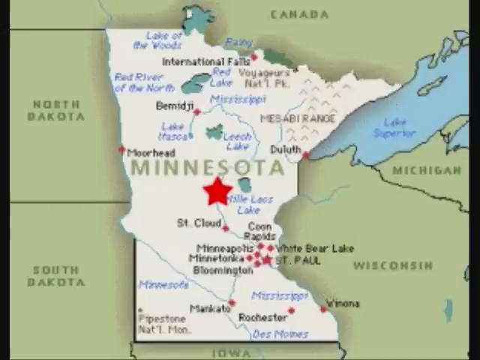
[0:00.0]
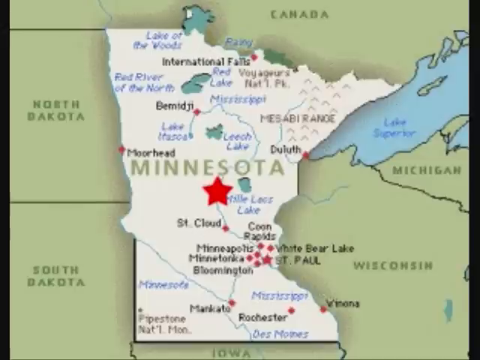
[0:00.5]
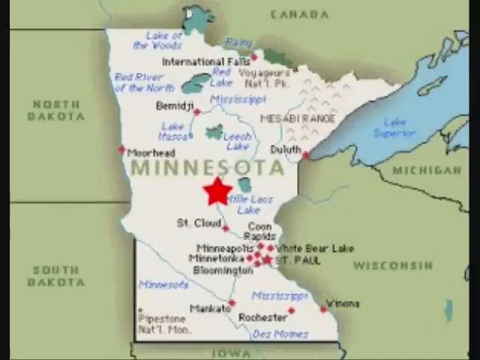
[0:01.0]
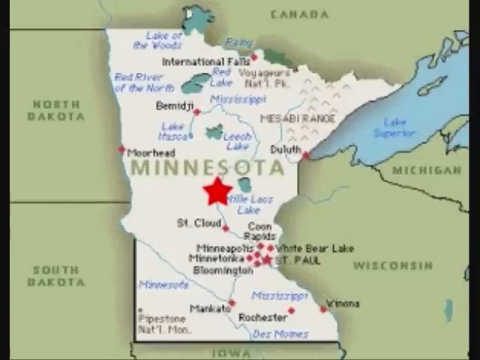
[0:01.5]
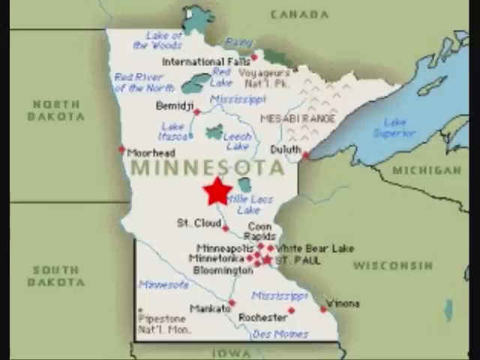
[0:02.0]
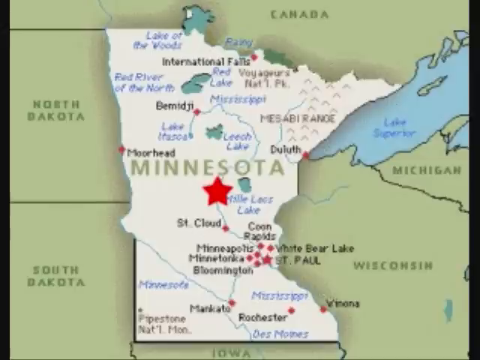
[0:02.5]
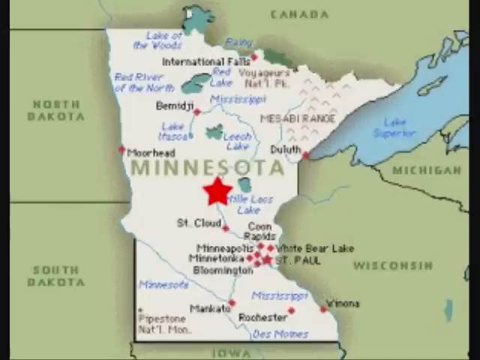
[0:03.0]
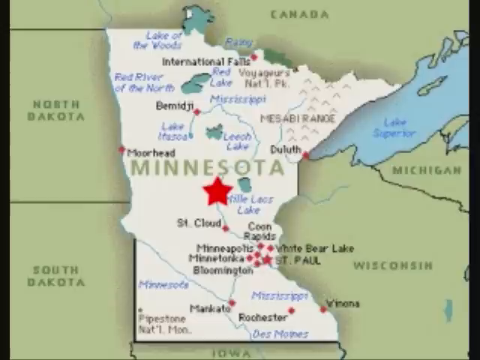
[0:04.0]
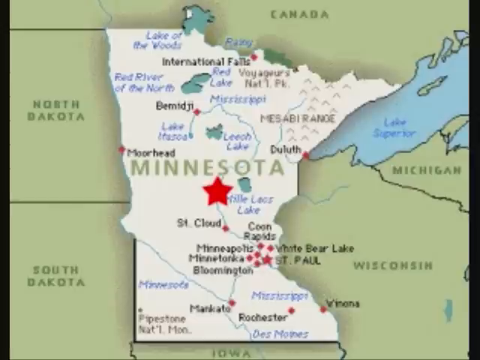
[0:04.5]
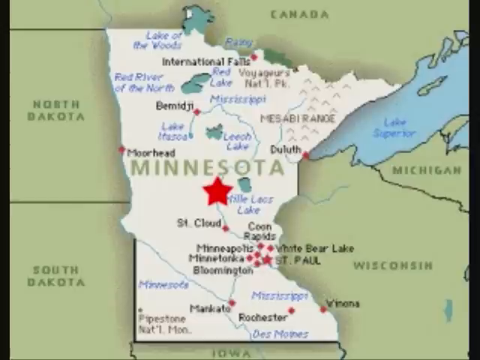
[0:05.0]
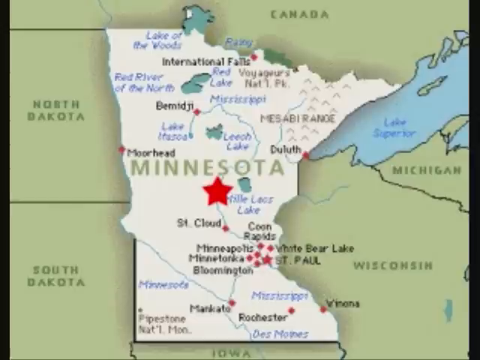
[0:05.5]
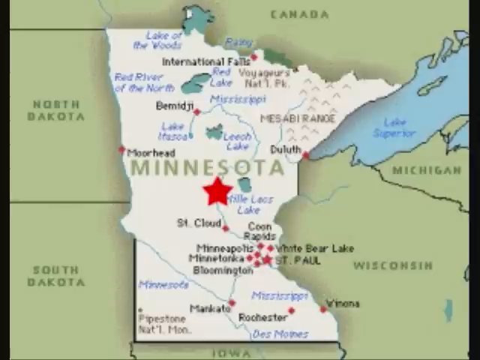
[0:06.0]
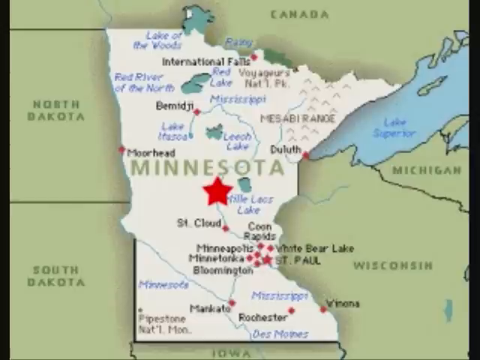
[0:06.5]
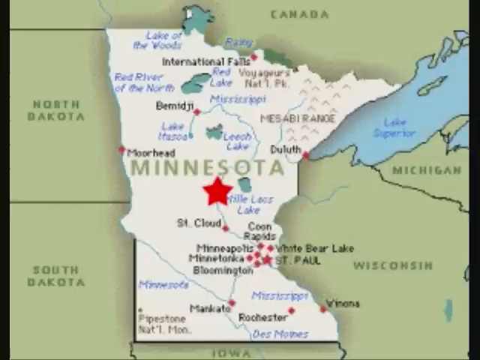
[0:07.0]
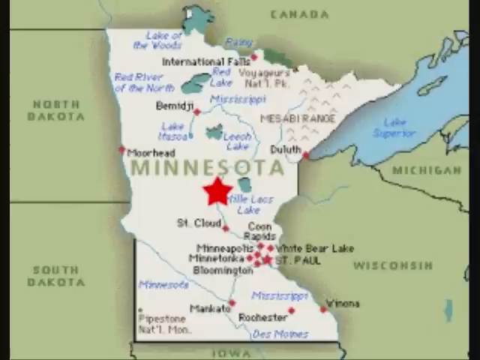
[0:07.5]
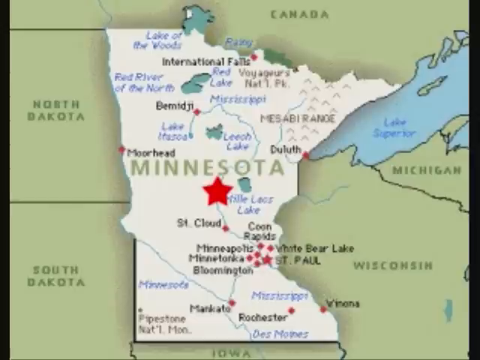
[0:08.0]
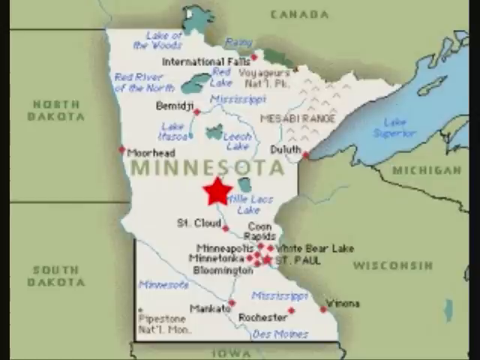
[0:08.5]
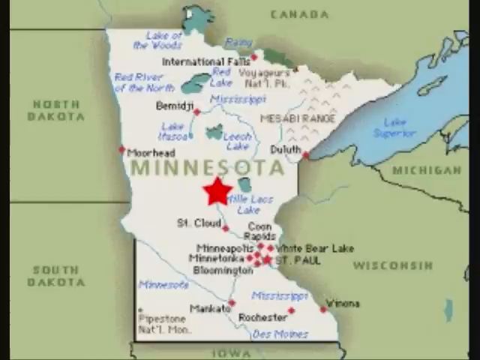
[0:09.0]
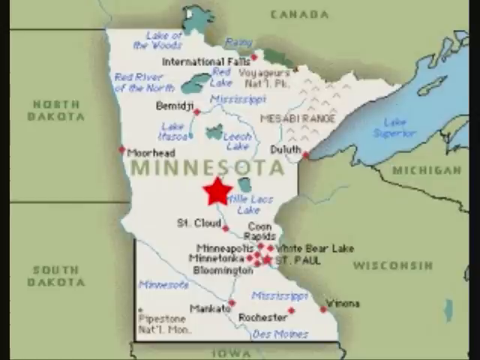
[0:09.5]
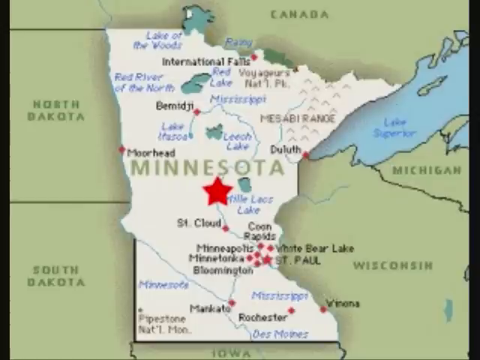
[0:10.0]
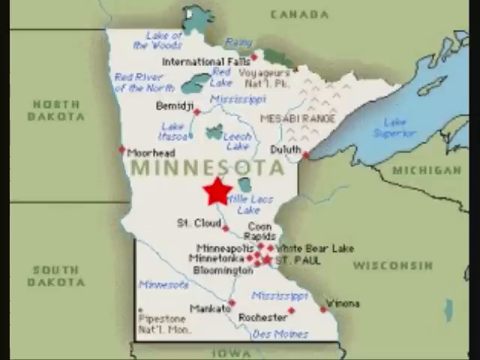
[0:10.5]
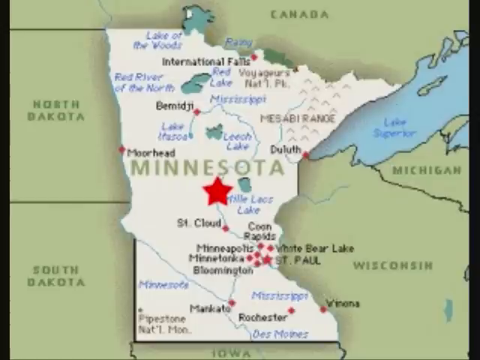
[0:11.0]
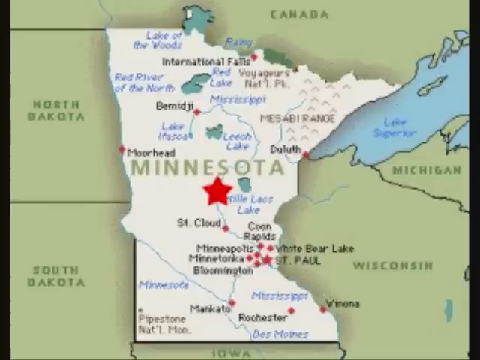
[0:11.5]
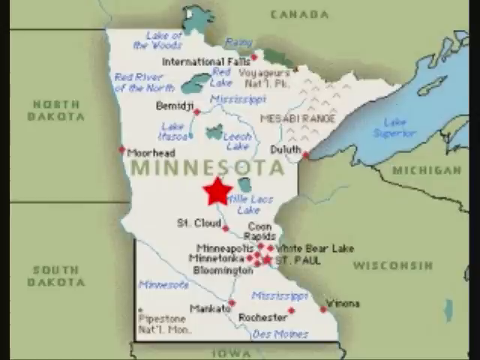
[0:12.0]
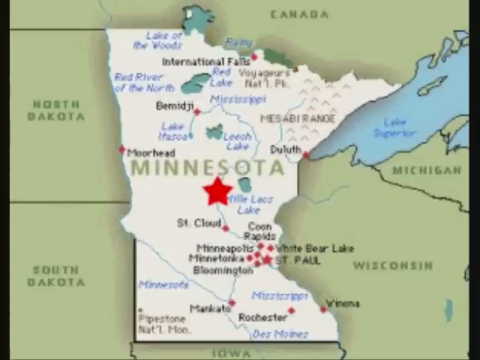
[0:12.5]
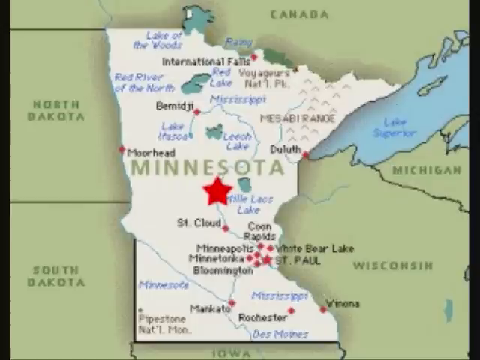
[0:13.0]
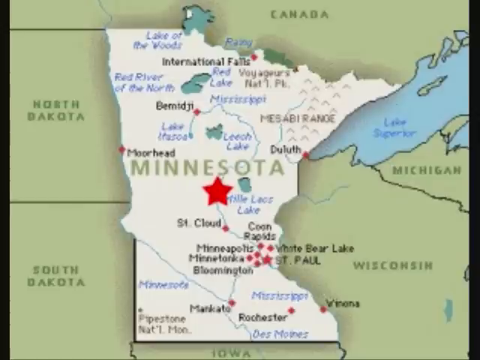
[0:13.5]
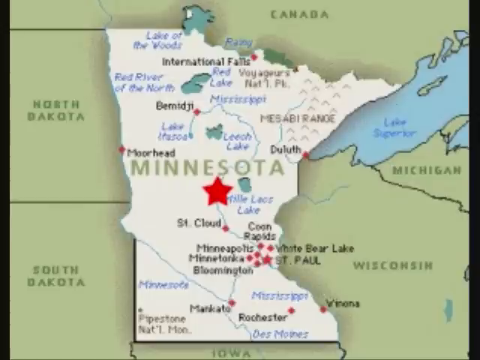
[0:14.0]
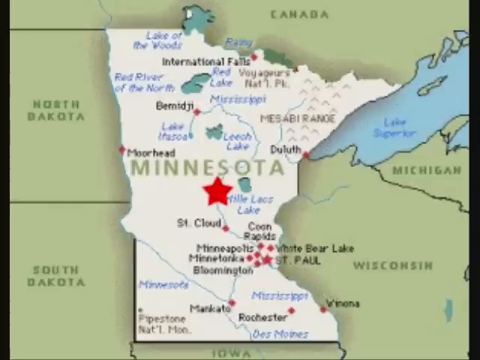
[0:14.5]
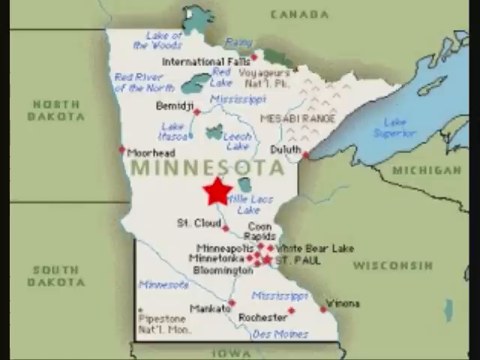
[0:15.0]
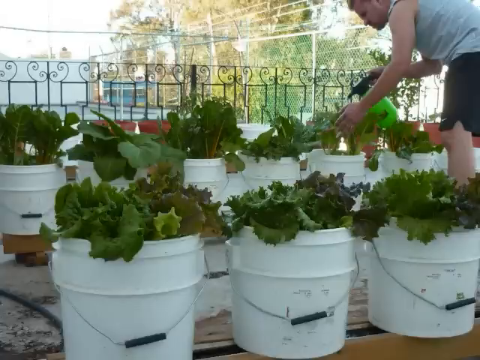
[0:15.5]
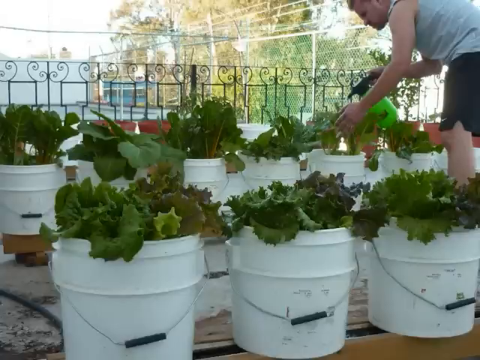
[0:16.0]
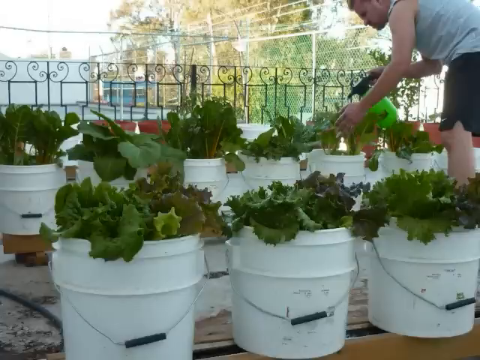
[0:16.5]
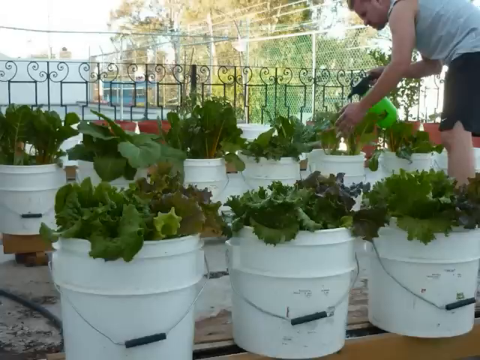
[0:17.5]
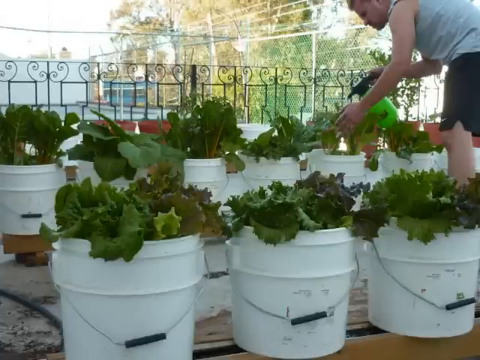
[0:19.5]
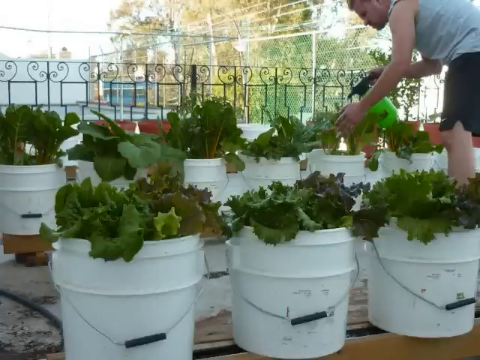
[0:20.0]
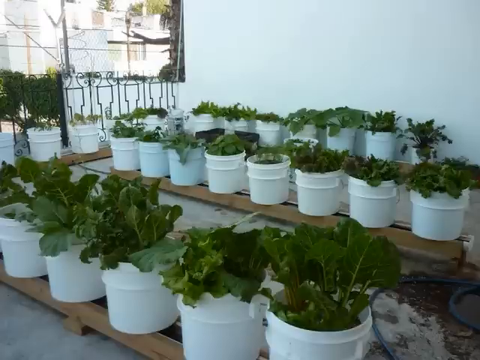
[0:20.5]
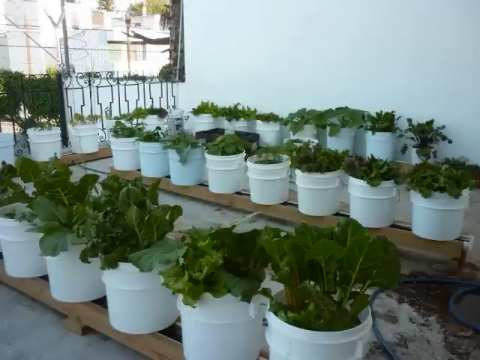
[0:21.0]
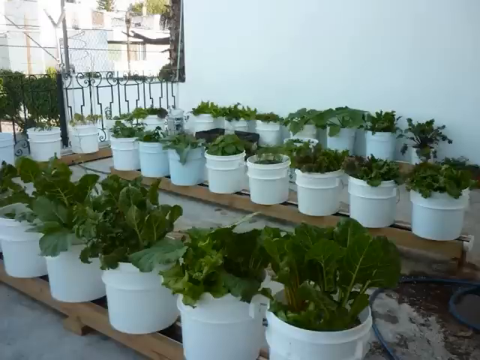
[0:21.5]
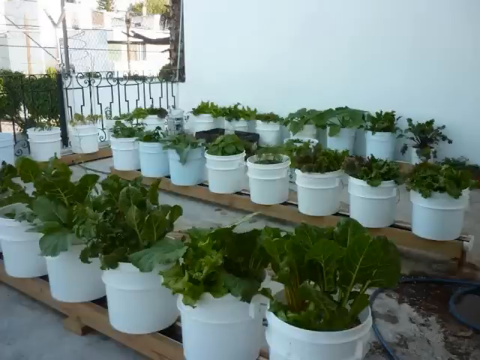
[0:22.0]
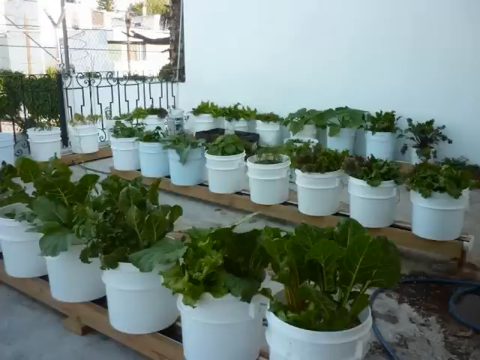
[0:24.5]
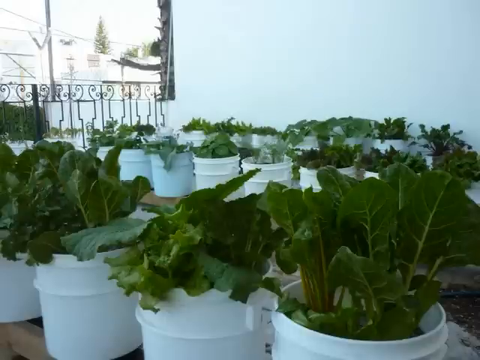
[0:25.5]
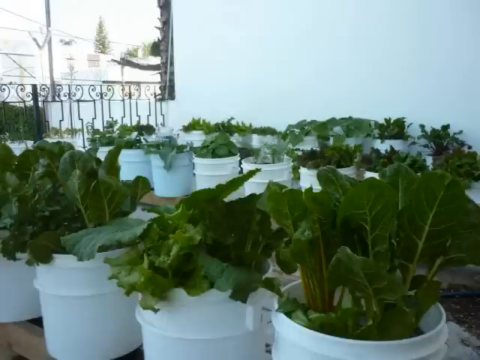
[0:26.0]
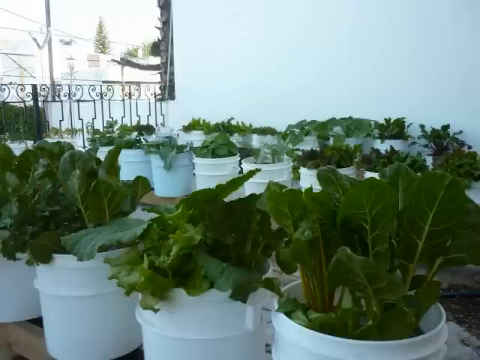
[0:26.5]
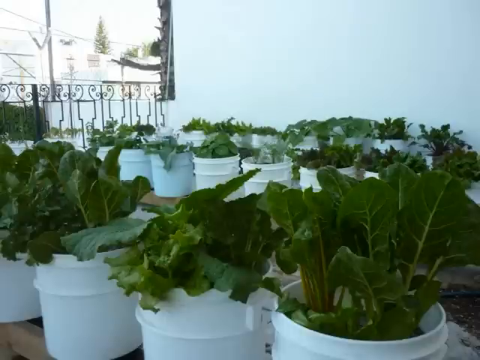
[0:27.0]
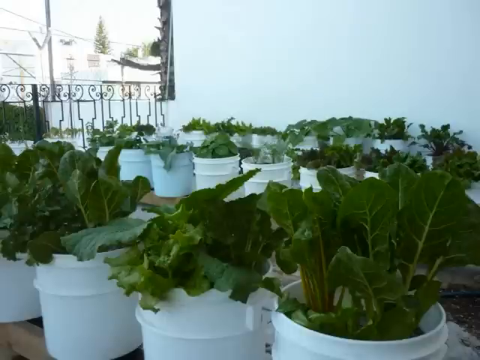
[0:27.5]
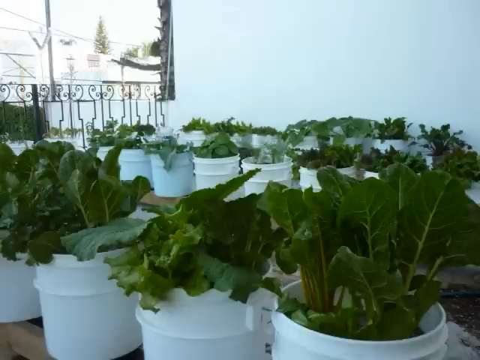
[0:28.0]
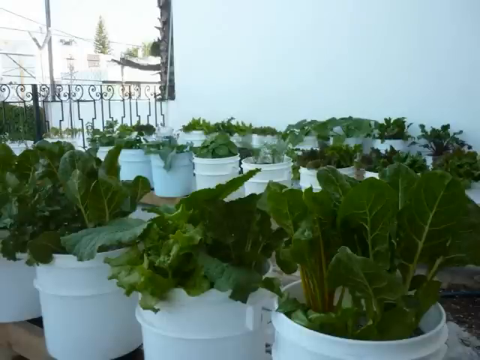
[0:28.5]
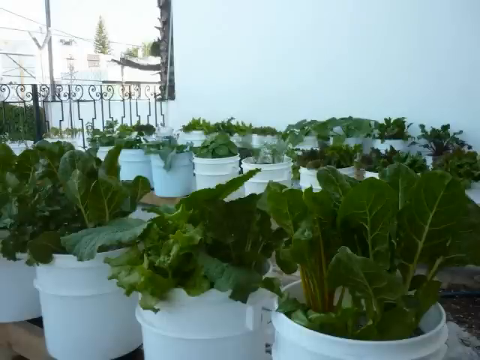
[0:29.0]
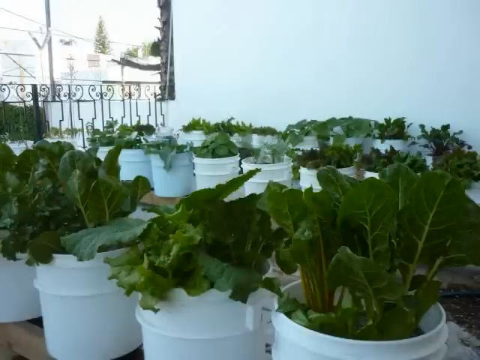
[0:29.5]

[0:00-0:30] A map of Minnesota appears on the screen, showing several parts of the state. Minnesota is highlighted in white, while the rest of the states are green. The neighboring states North Dakota, South Dakota, Wisconsin and Michigan are visible, and Canada lies on the north side of Minnesota. Inside Minnesota there is a red star, along with a few other smaller stars; big blue stars mark St. Cloud and Rochester. After the map, a man is seen watering vegetables, apparently kale or spinach, growing in white water buckets. He wears a gray vest and black shorts and uses a green spray can to spray water on the vegetables.